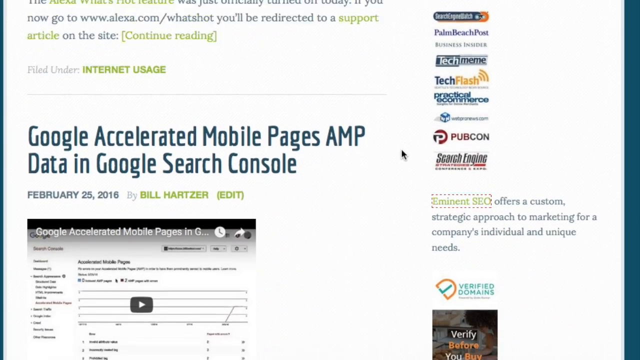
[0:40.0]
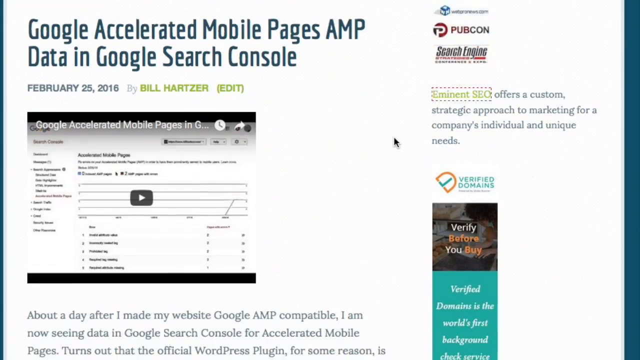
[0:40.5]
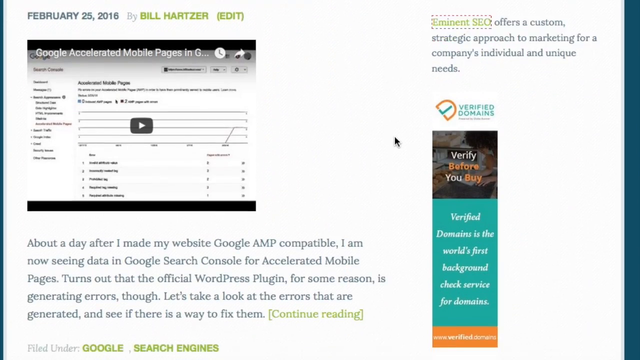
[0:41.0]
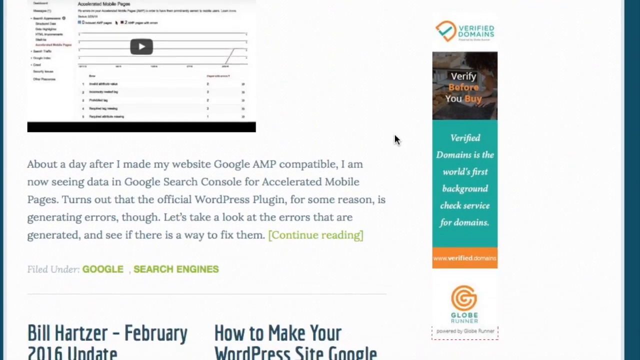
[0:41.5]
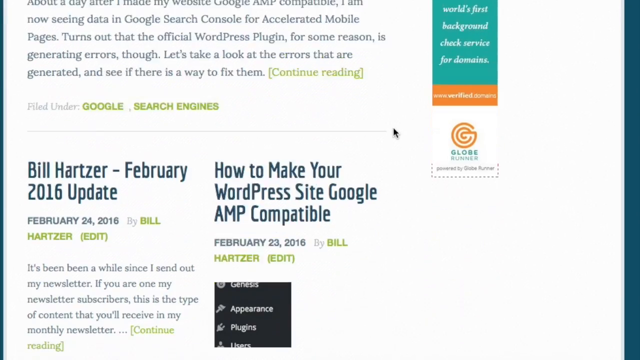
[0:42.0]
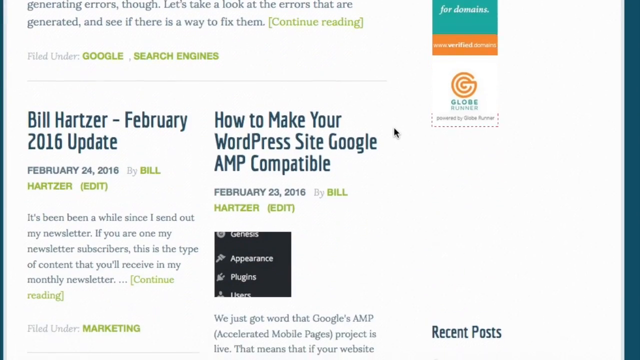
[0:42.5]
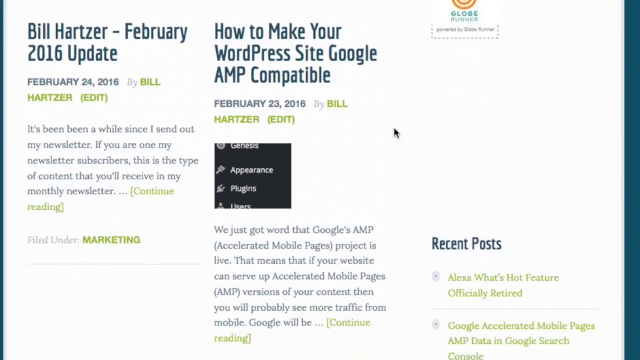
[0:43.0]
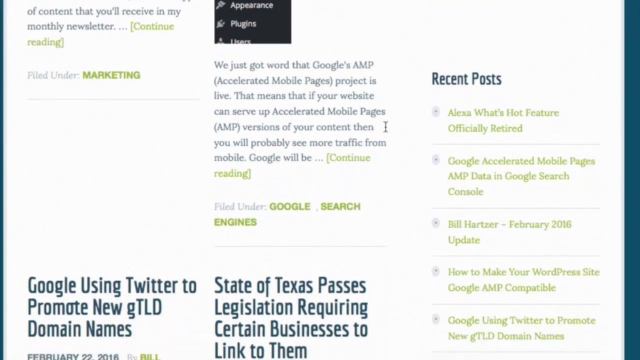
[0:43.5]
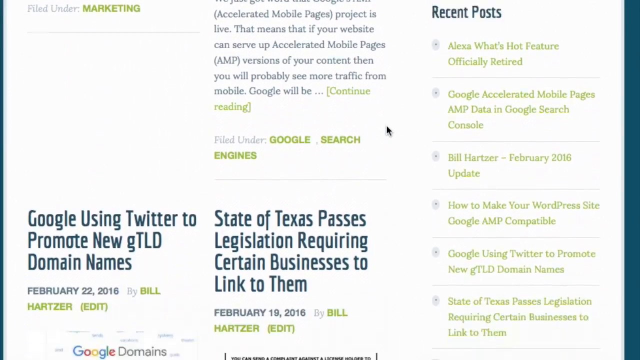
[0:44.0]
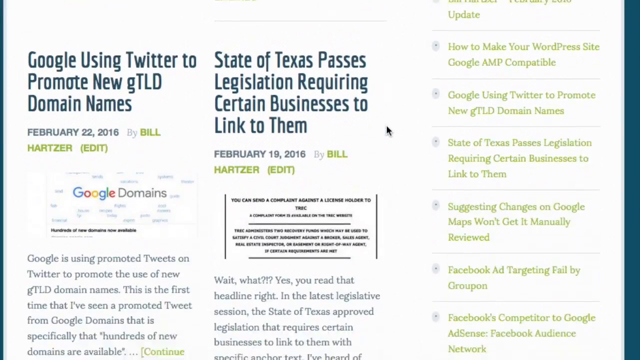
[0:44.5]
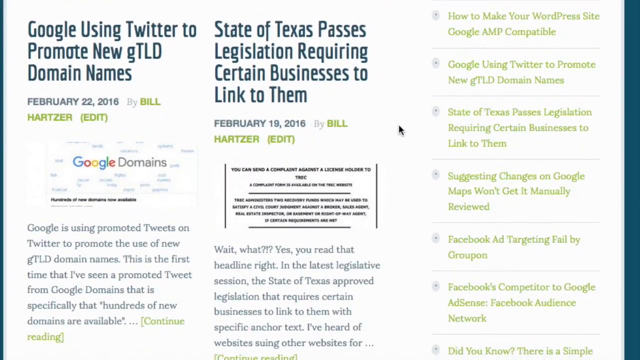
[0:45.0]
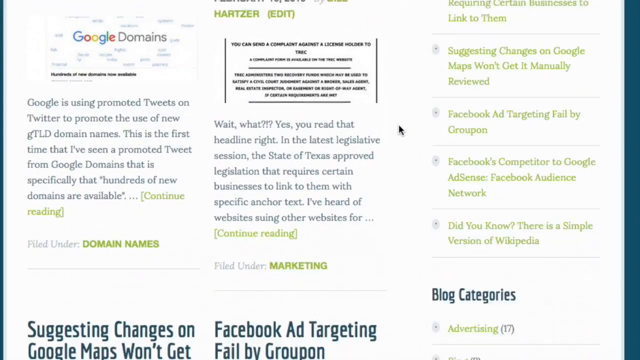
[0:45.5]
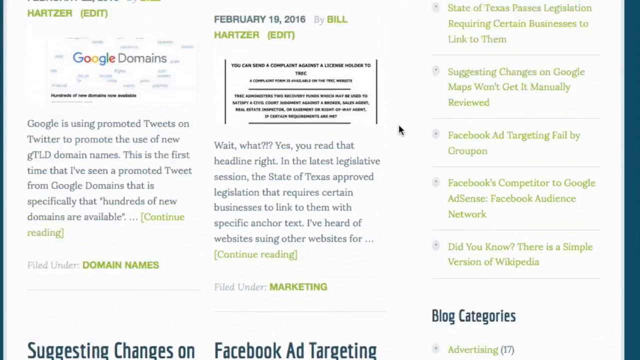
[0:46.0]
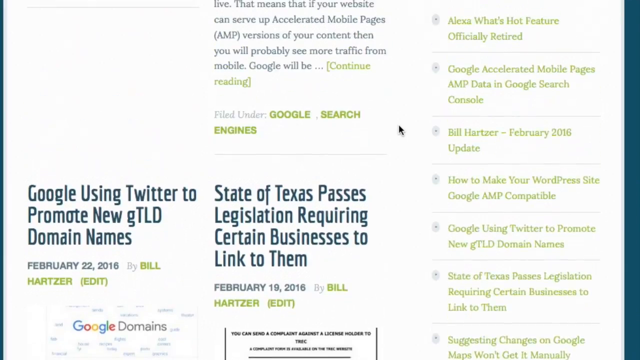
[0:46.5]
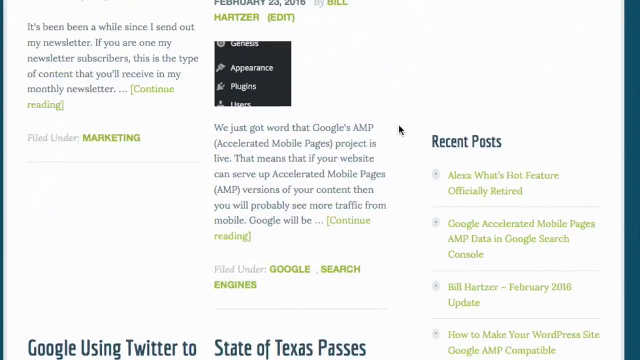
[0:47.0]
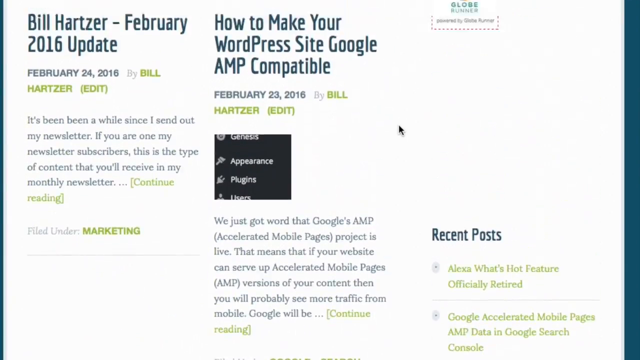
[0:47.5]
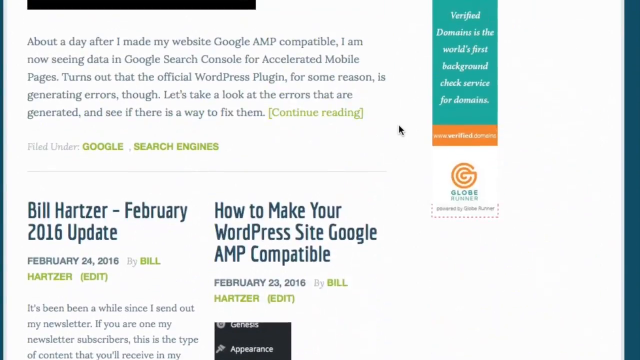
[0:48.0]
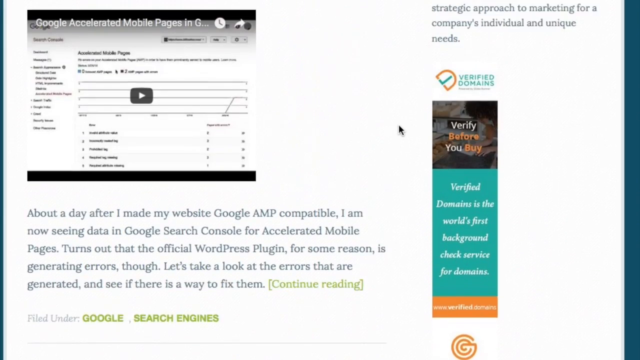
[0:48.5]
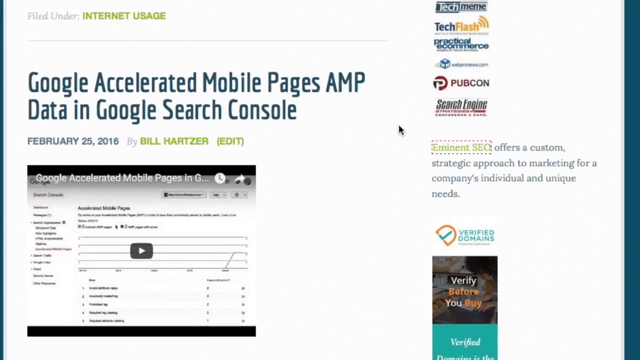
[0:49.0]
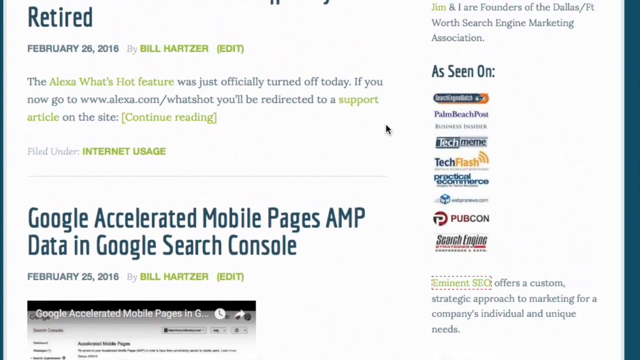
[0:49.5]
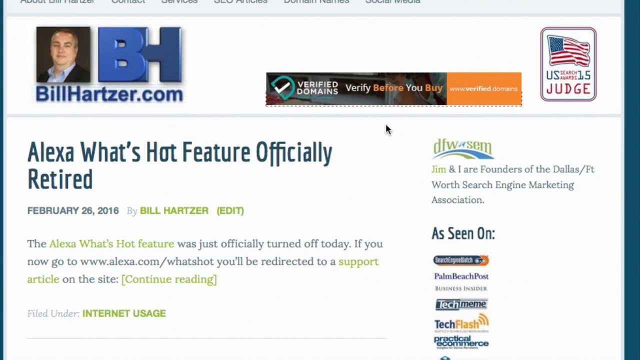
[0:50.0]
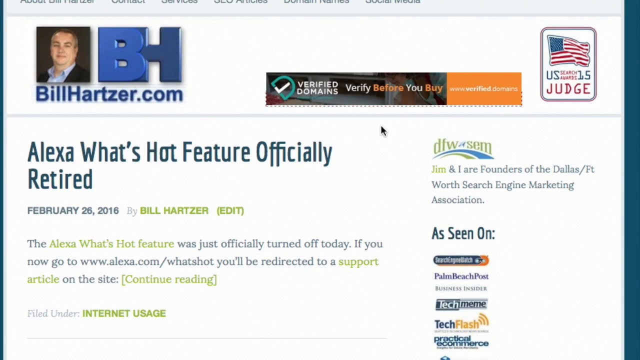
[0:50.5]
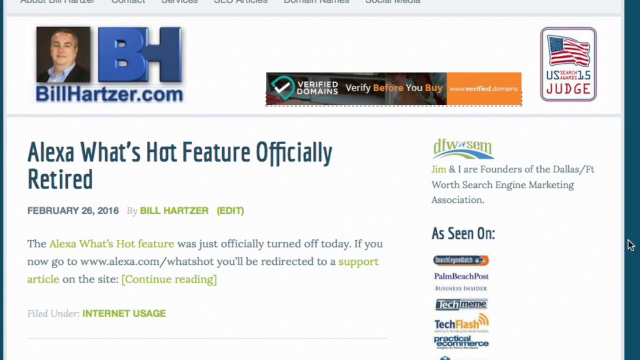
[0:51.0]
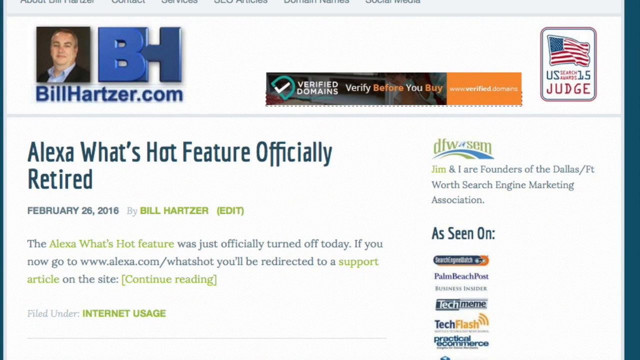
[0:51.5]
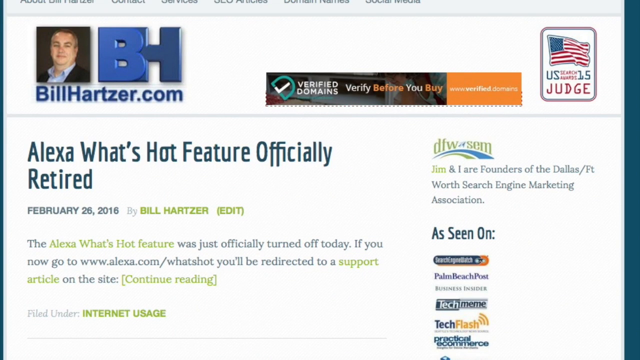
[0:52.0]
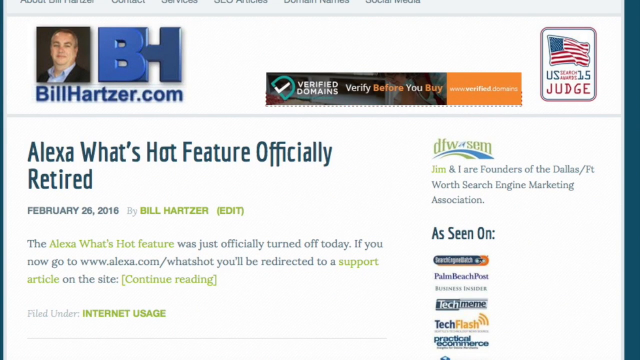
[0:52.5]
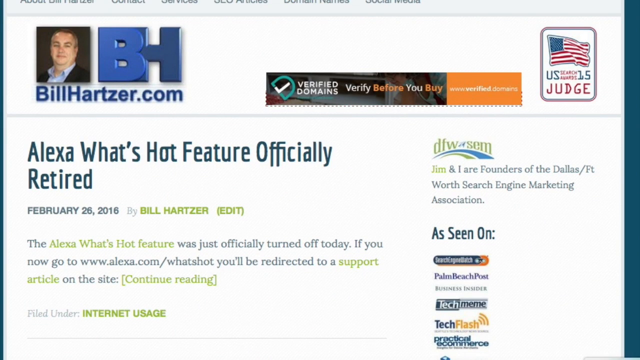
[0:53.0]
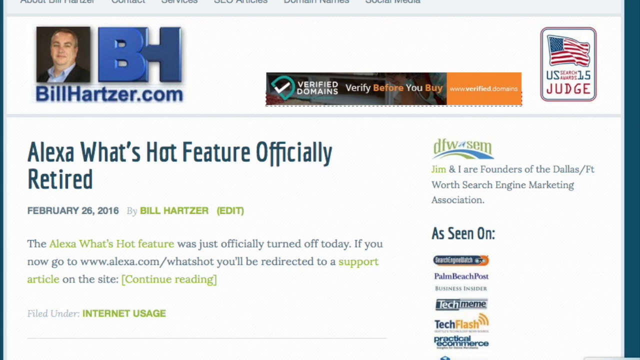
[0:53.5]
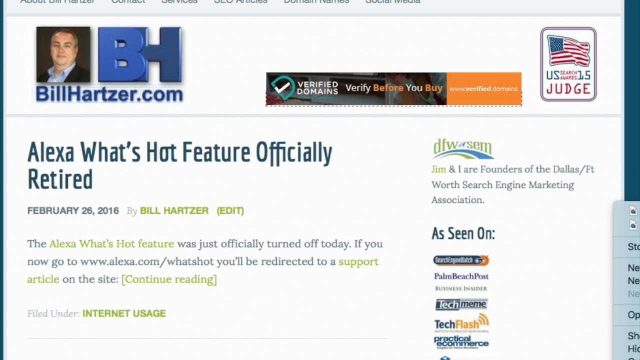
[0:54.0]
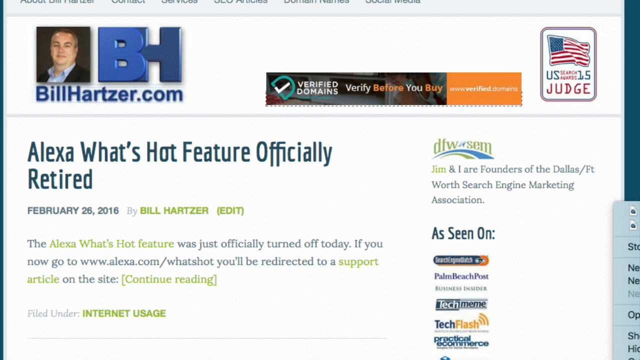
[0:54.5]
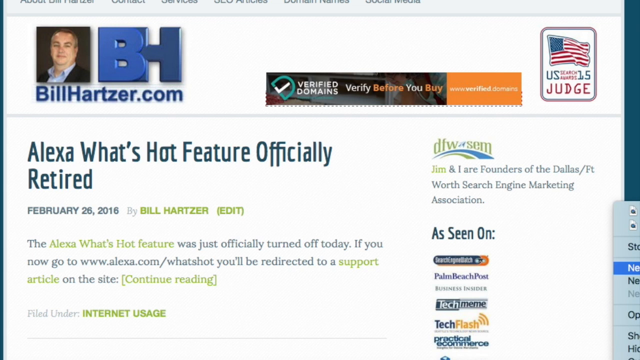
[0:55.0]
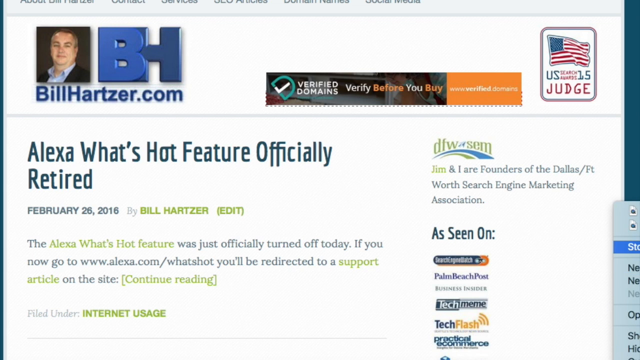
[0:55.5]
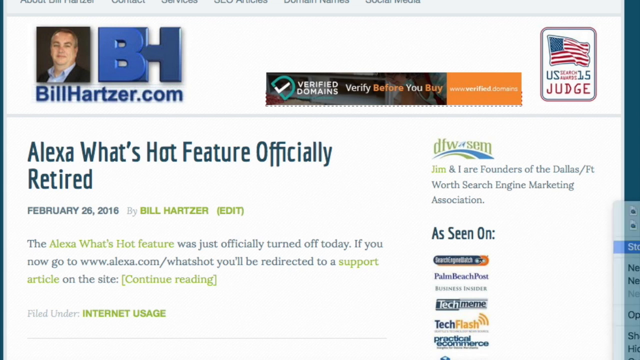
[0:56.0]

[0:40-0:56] On the same website, the page is scrolled down, showing what looks like article after article written by the same person, almost like blog entries, and then scrolled back up. "BillHartzer.com" is at the top corner, along with a big "BH" in blue and a photo of a man presumed to be Bill Hartzer. On the right is text mentioning "U.S. 15 judge", with an American flag above it.